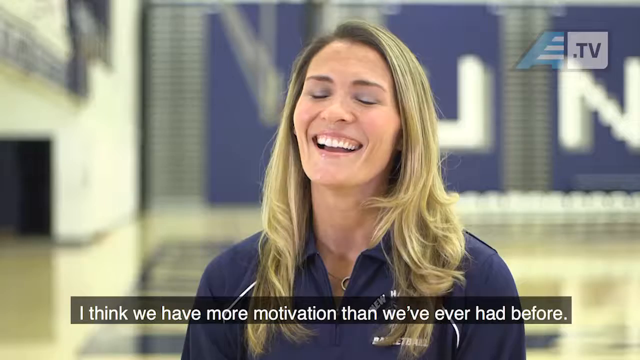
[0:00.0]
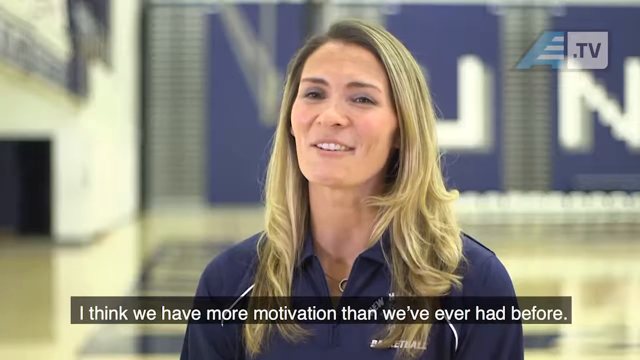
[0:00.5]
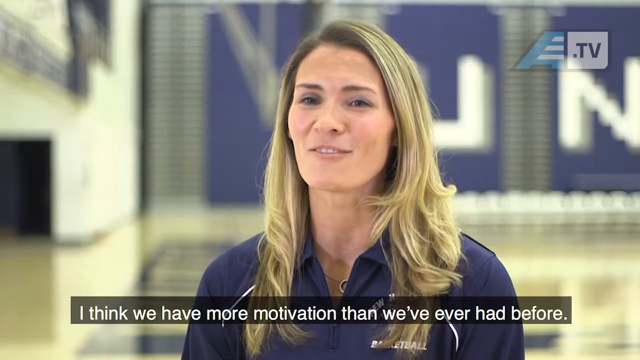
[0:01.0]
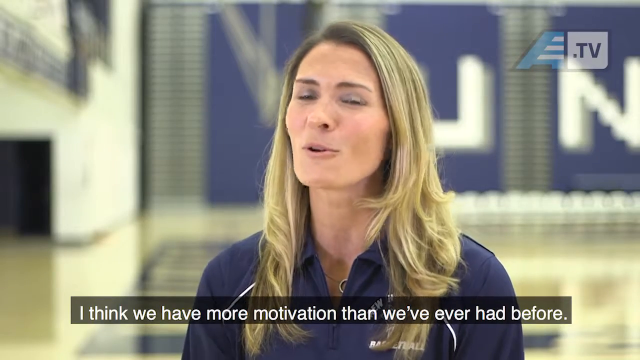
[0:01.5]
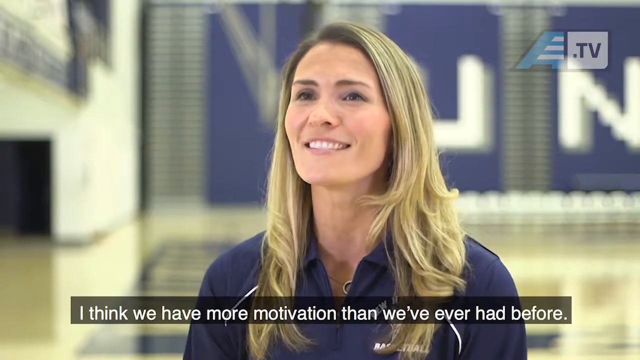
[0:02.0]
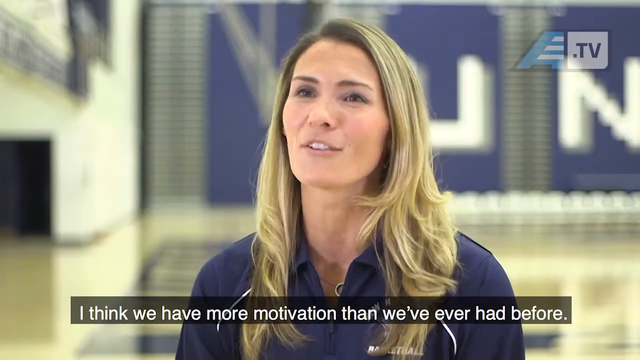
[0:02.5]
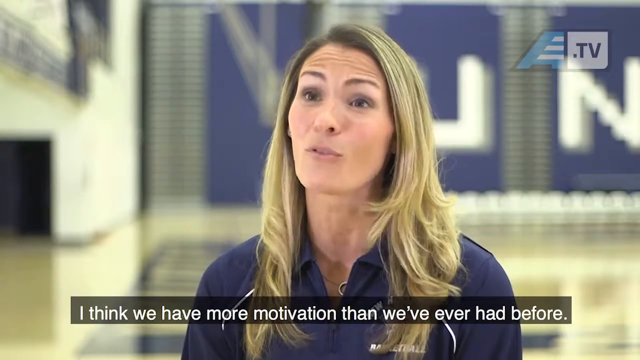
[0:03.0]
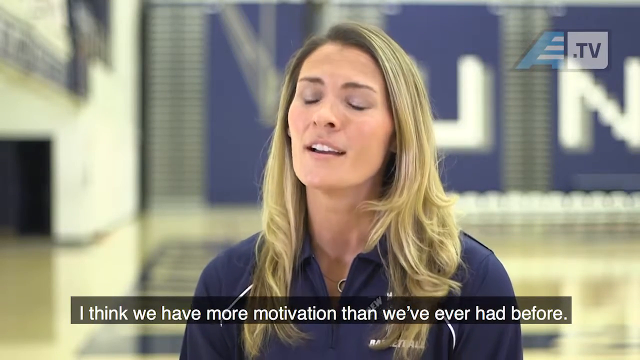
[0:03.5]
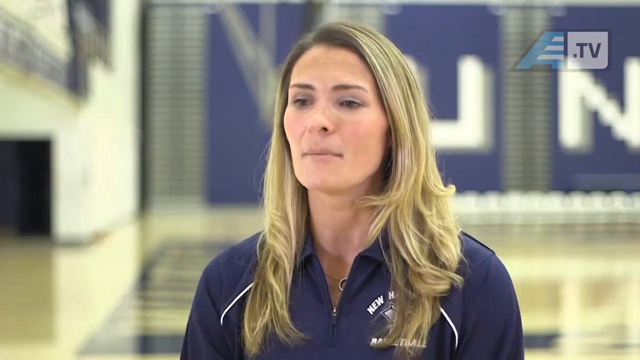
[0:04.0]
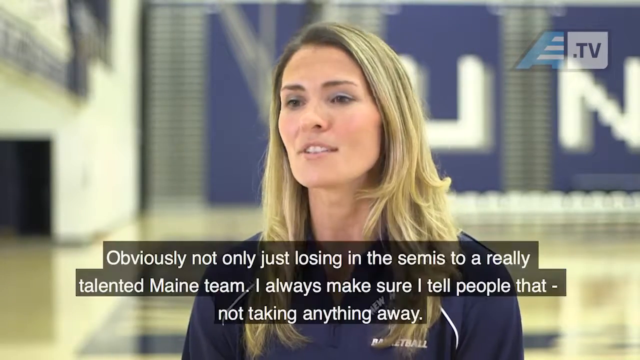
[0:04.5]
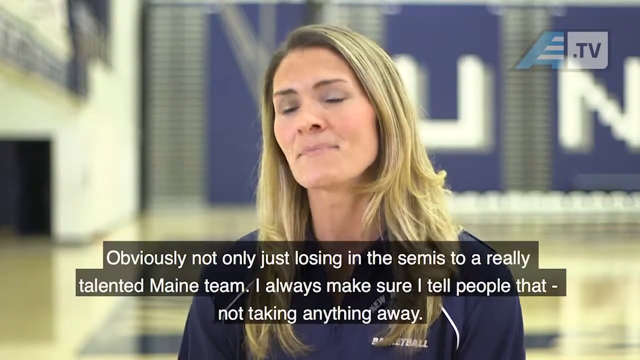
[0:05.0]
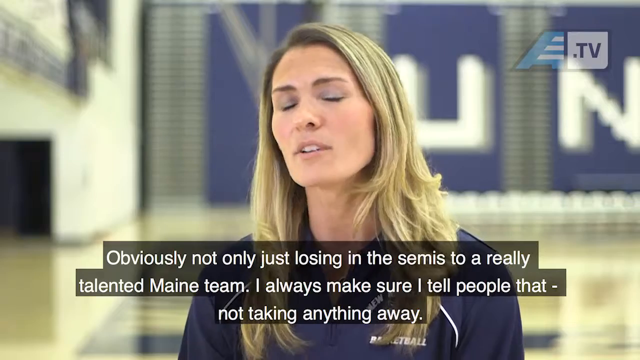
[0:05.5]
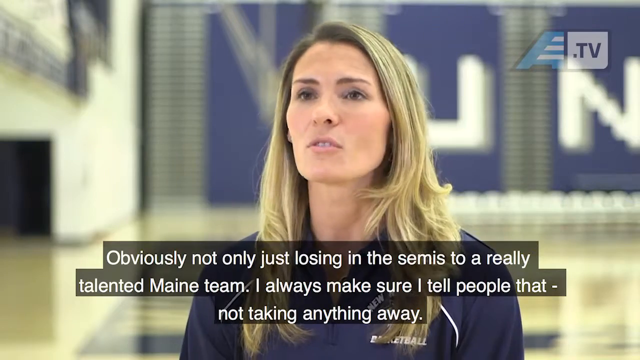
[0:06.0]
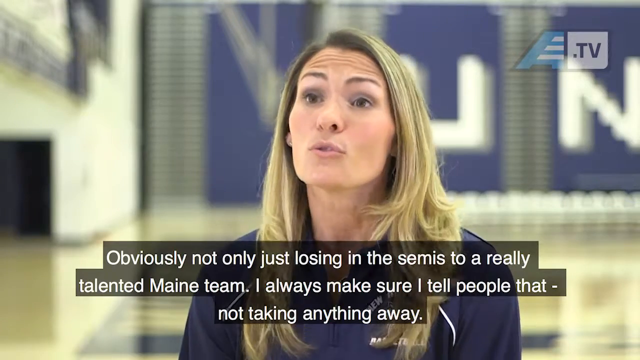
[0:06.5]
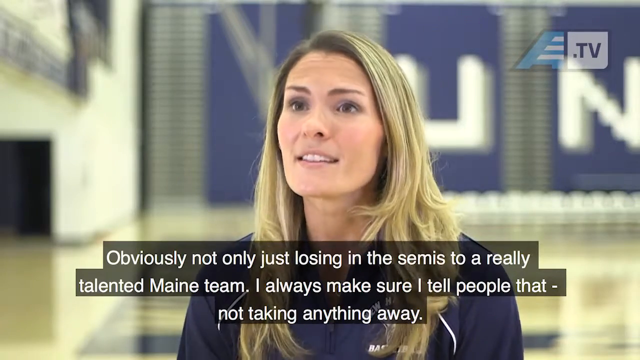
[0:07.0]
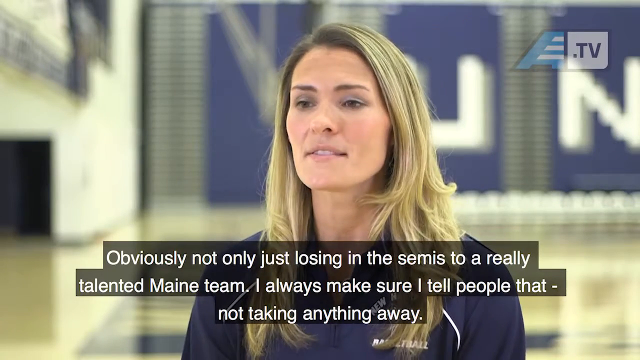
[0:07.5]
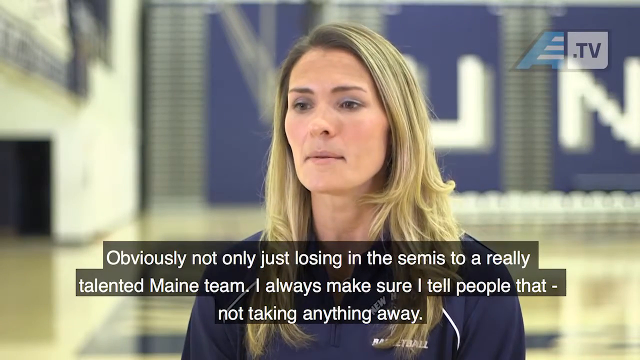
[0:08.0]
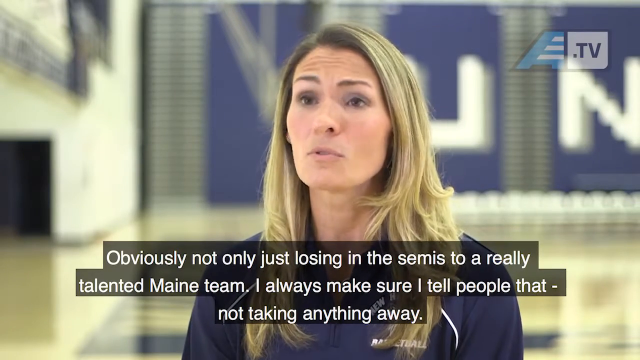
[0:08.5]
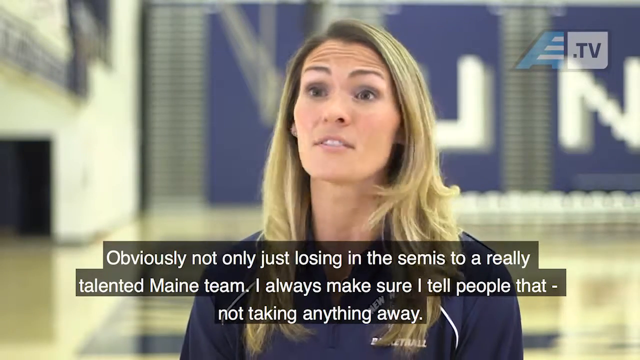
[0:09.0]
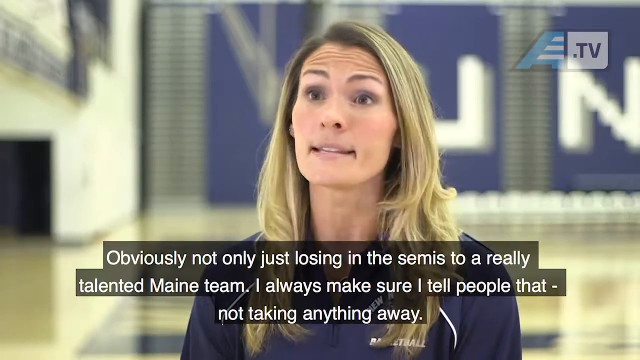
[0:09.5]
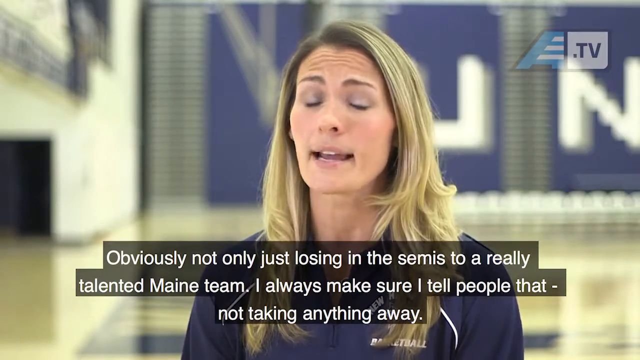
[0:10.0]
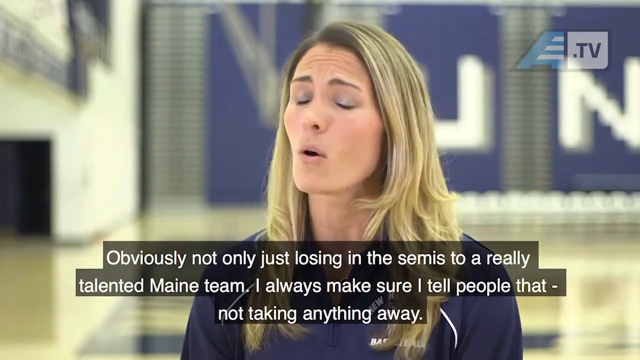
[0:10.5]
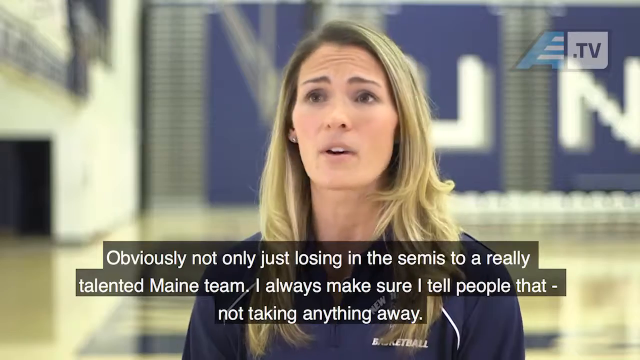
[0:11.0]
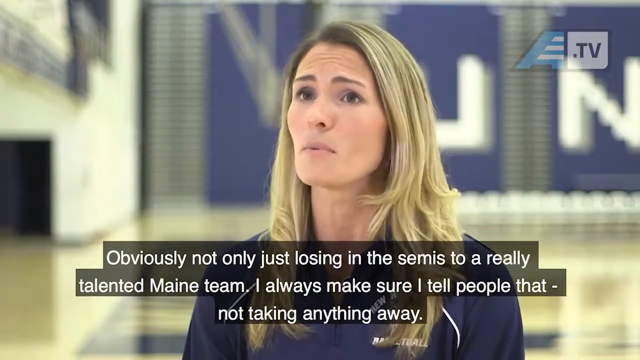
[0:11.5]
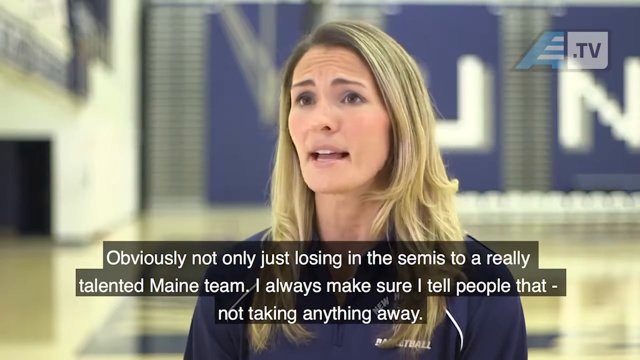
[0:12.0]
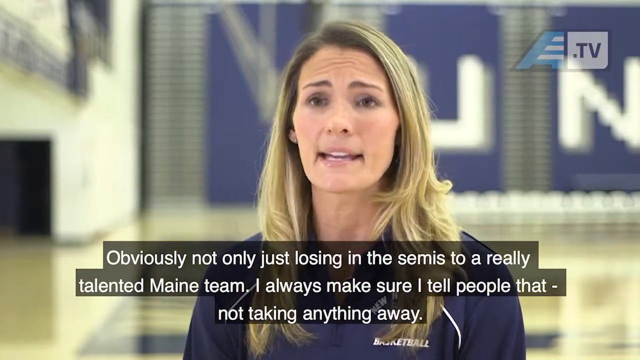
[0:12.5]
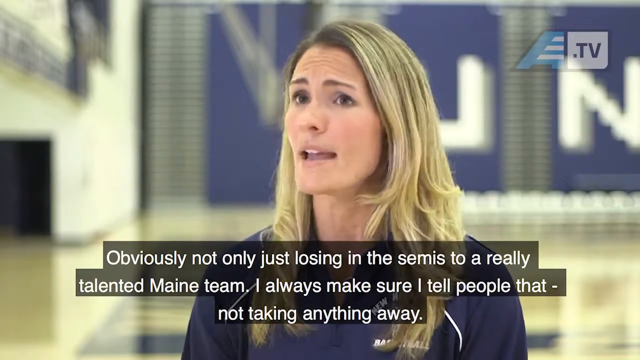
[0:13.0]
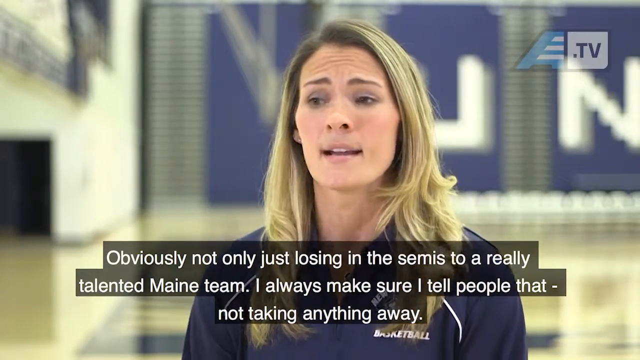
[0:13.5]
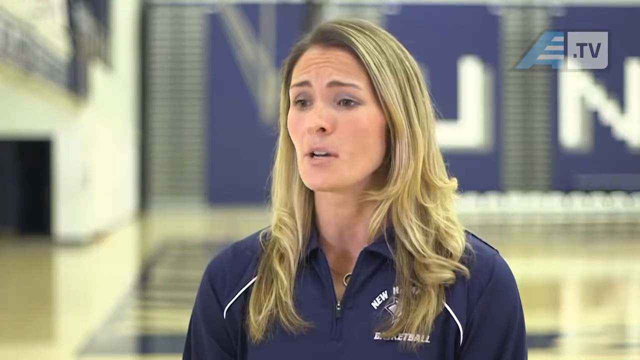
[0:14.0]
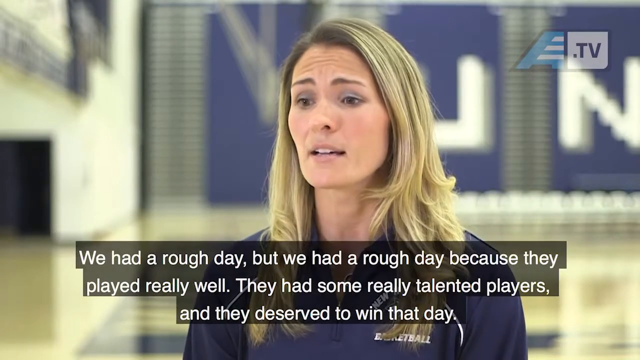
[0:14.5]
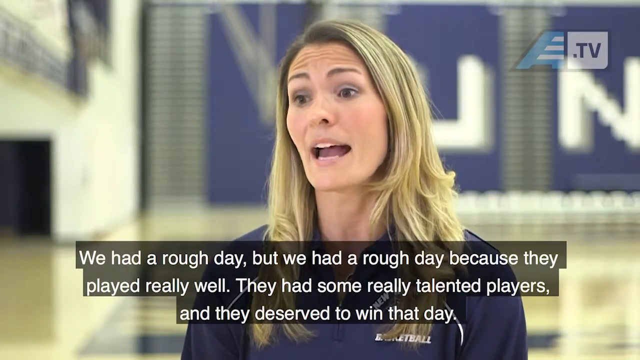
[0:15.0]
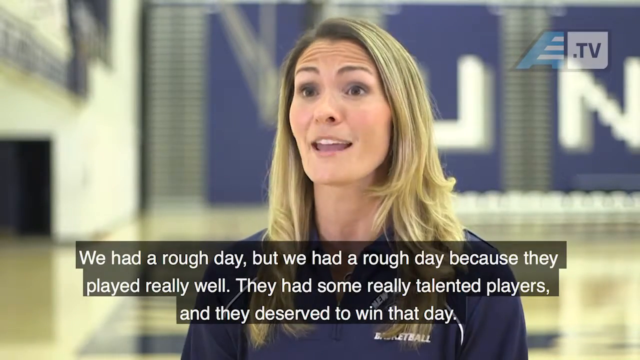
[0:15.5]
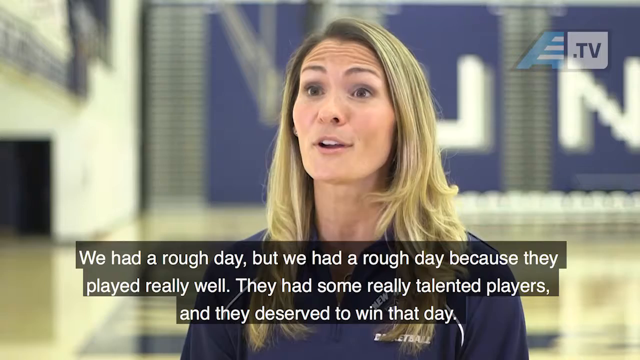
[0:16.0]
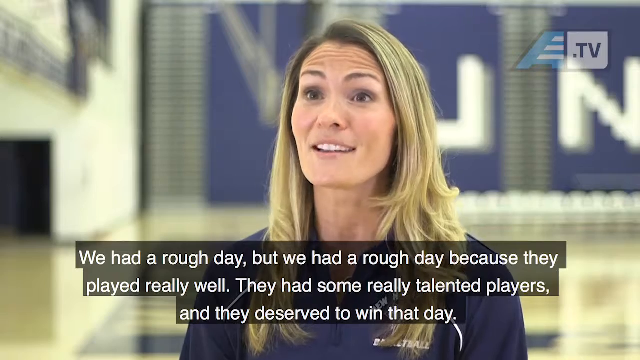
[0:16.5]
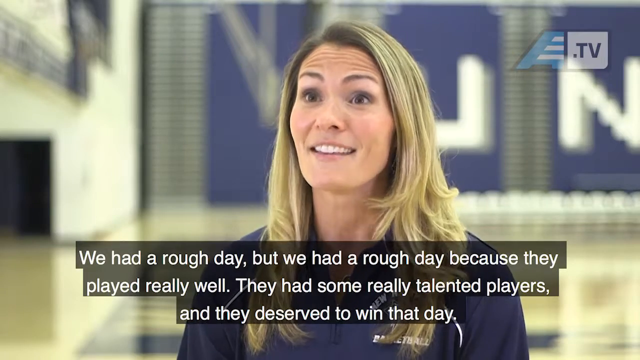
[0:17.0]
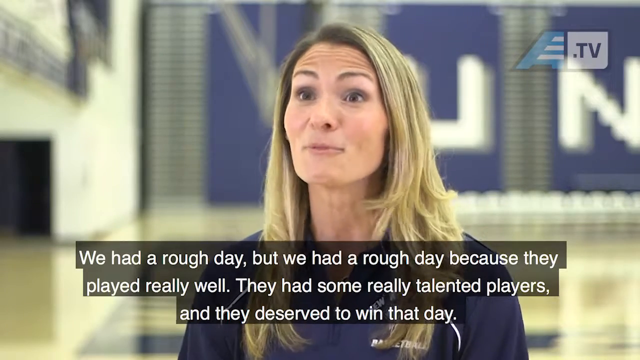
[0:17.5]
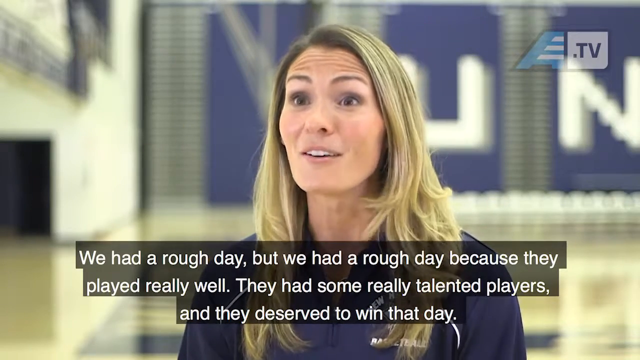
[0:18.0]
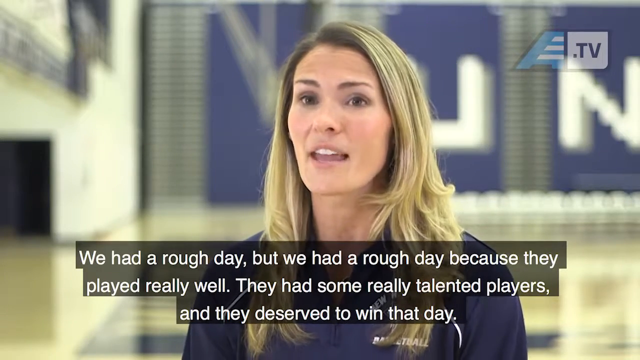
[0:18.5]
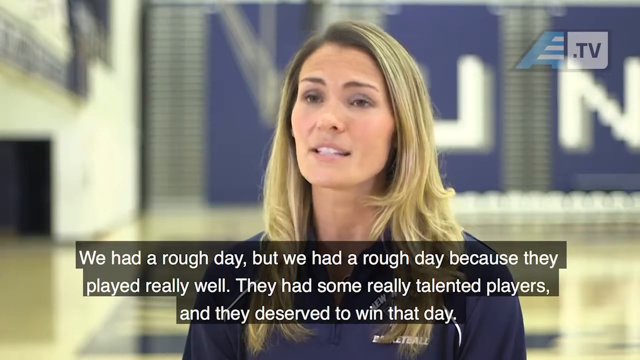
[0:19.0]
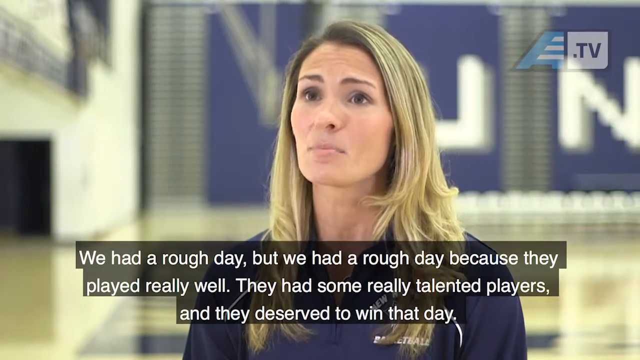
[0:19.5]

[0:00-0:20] A woman talks to someone as the subtitle "I think we have more motivation than we've ever had before" appears. She has very blonde hair, very white teeth, and wears a white and blue collared shirt. She is standing in front of some banners that have the letters U and N on them. The next subtitles read "obviously not only just losing the semis to a really talented main team. I always make sure I tell people that, not taking anything away." She shakes her head left and right as she speaks to the interviewer. The next subtitles read "We had a rough day, but we had a rough day because they played really well. They had some really talented players, and they deserved to win that day." The woman then nods her head up and down as if saying yes.